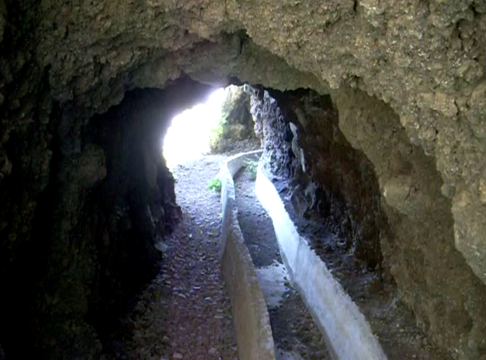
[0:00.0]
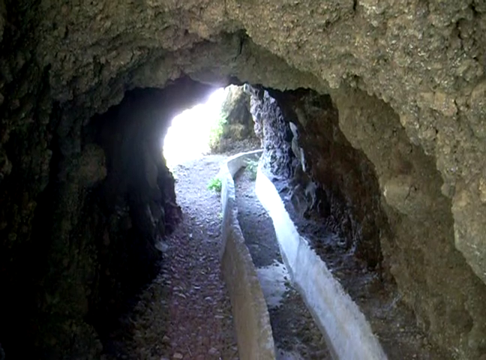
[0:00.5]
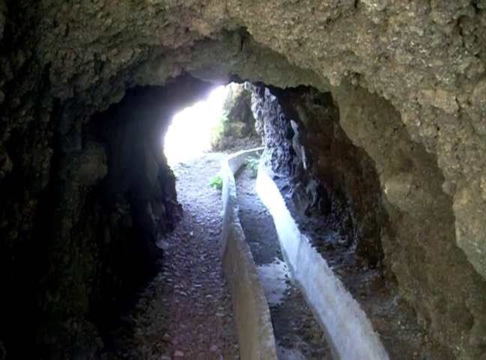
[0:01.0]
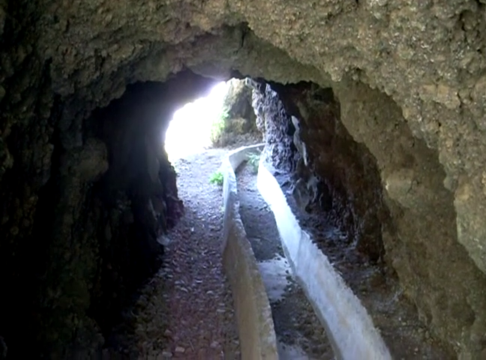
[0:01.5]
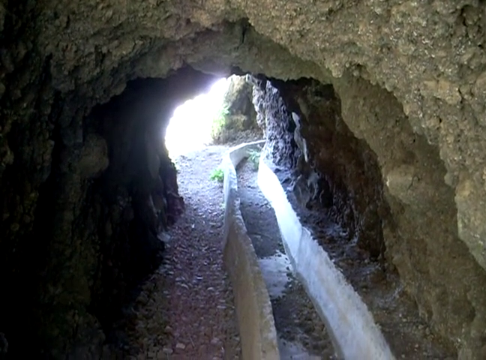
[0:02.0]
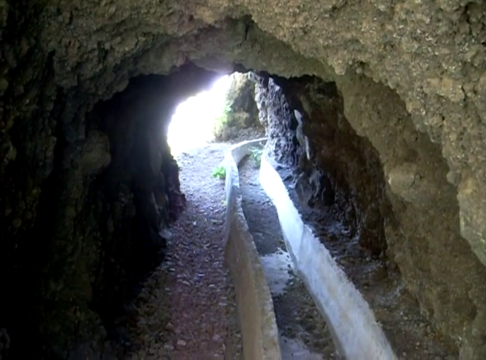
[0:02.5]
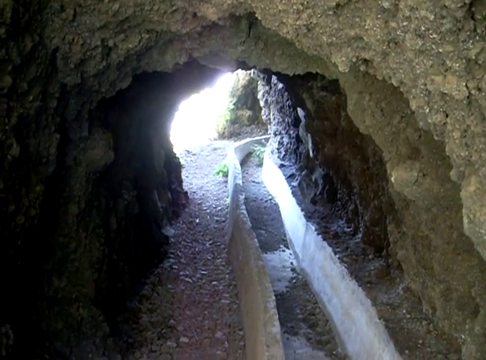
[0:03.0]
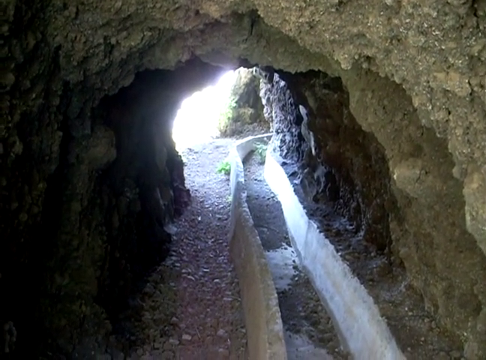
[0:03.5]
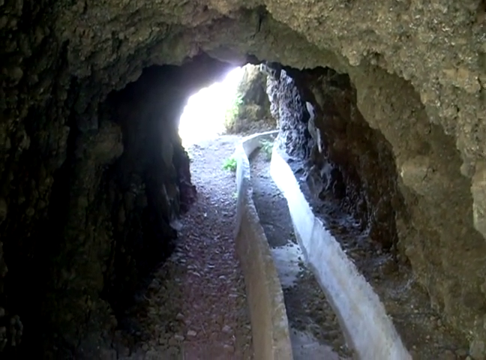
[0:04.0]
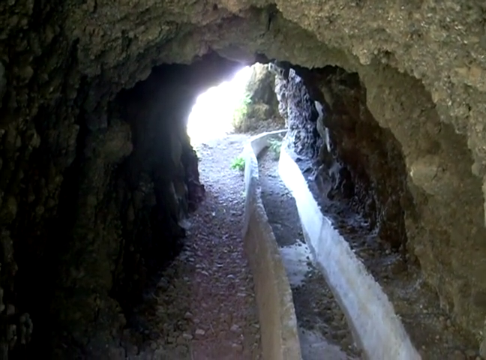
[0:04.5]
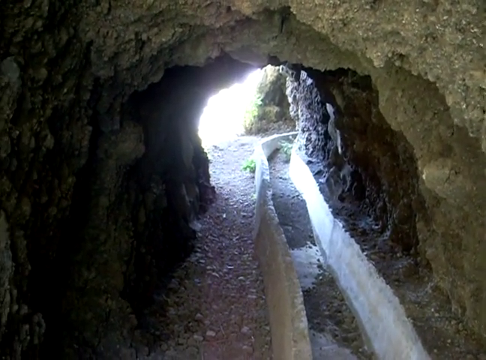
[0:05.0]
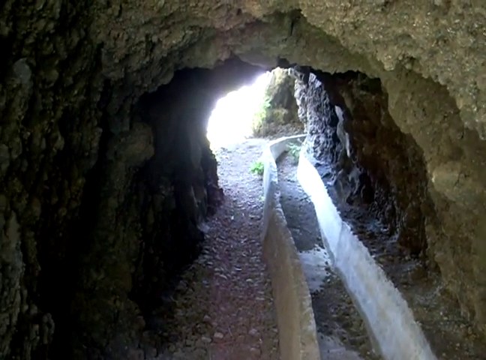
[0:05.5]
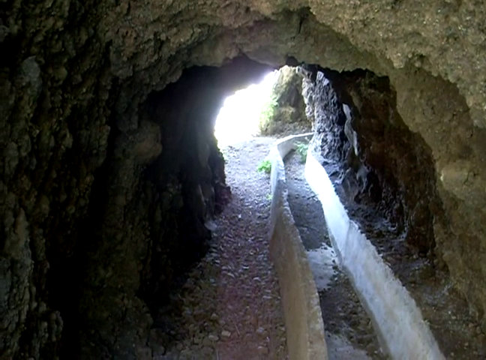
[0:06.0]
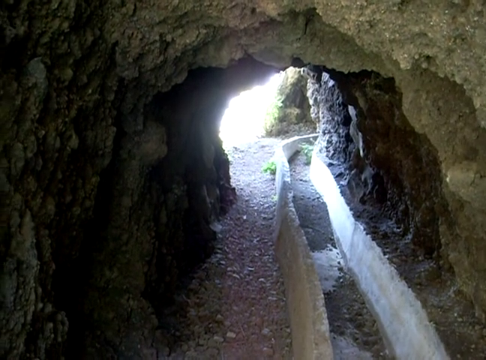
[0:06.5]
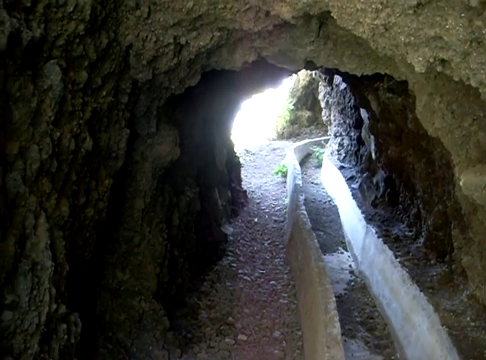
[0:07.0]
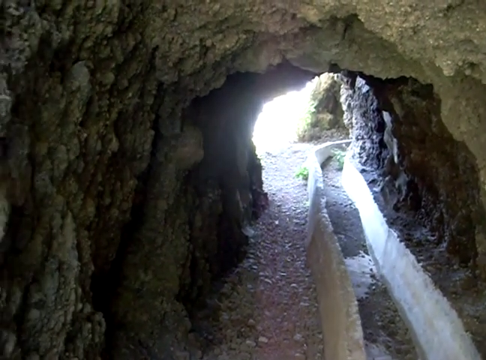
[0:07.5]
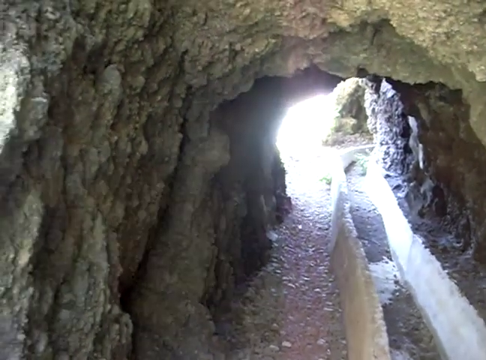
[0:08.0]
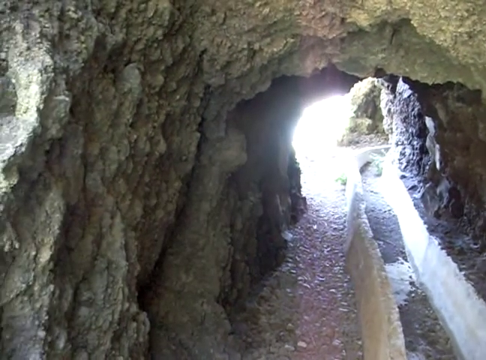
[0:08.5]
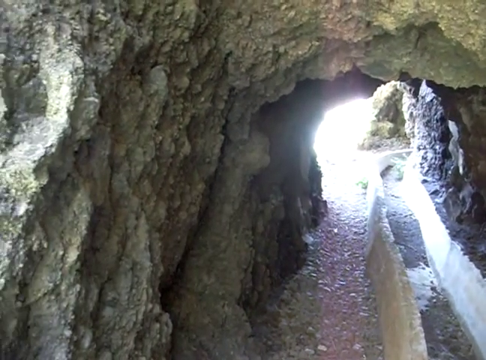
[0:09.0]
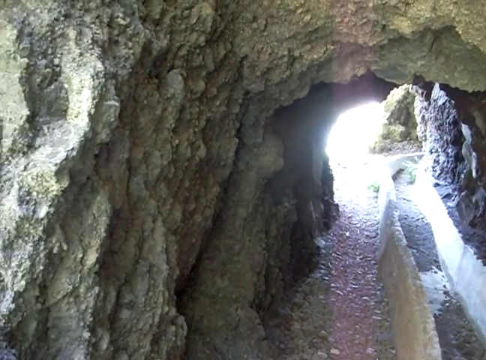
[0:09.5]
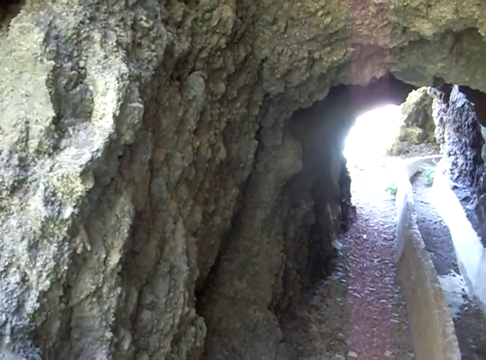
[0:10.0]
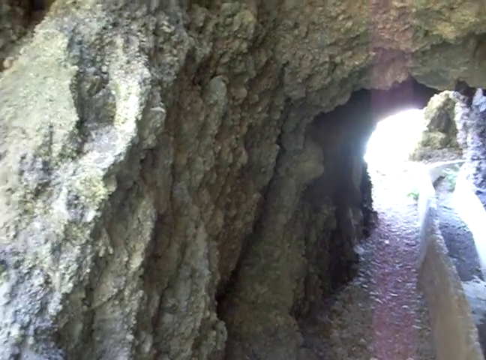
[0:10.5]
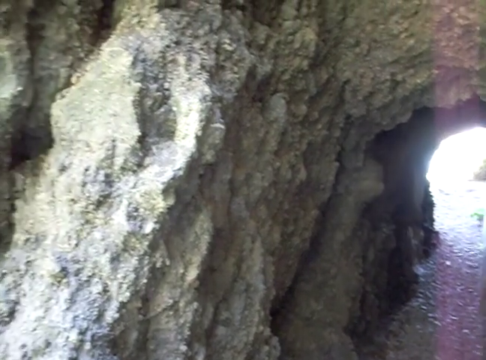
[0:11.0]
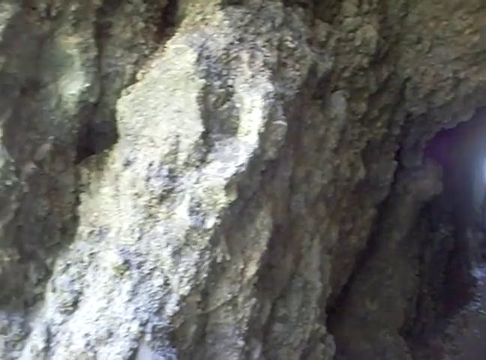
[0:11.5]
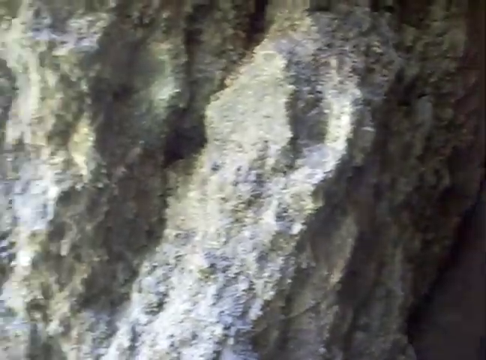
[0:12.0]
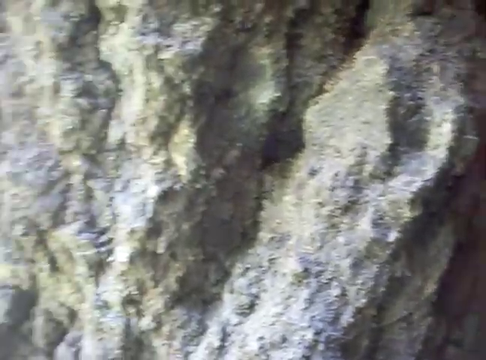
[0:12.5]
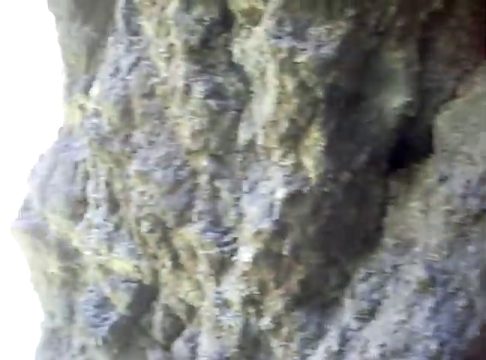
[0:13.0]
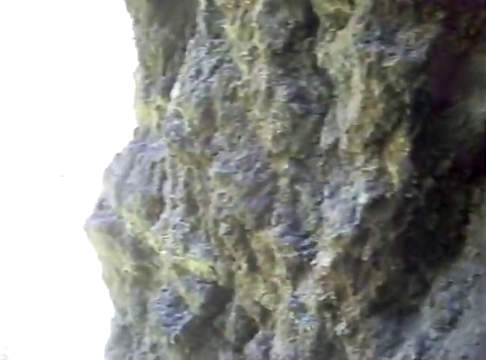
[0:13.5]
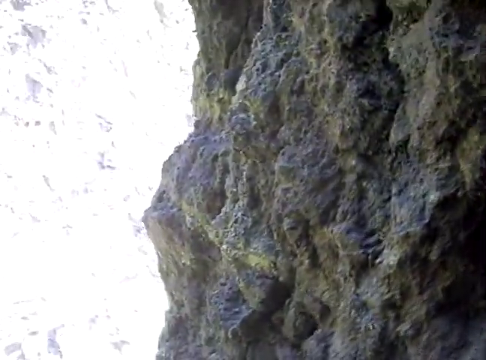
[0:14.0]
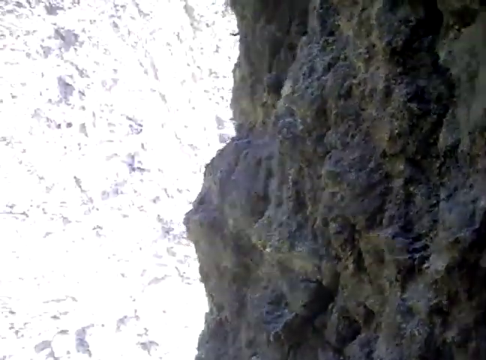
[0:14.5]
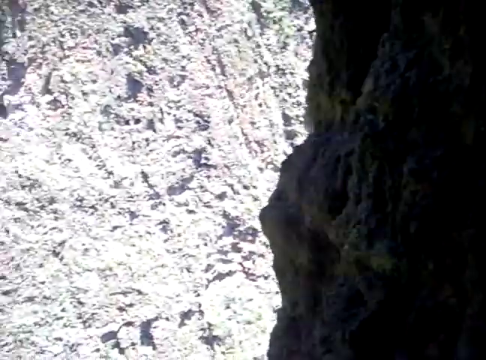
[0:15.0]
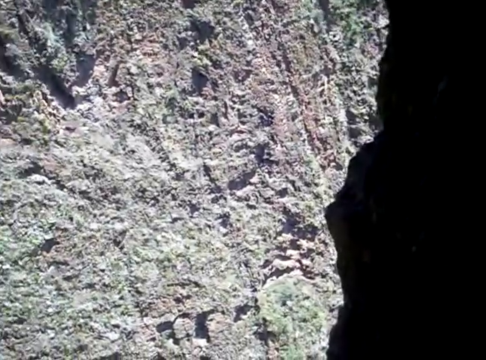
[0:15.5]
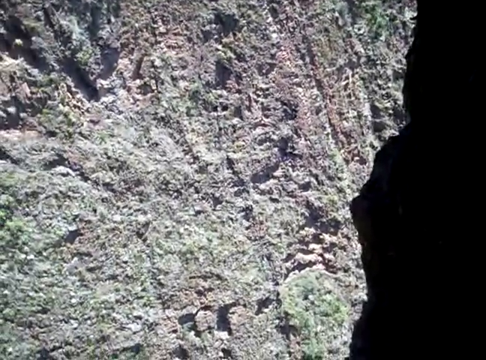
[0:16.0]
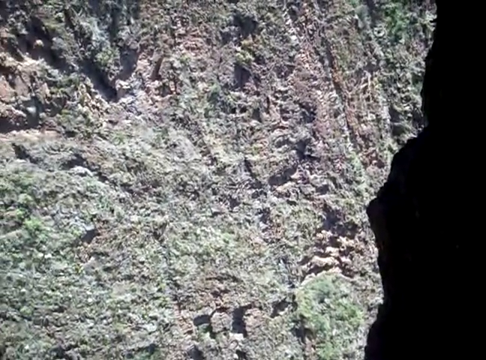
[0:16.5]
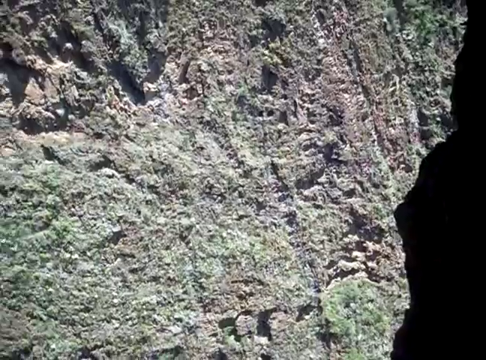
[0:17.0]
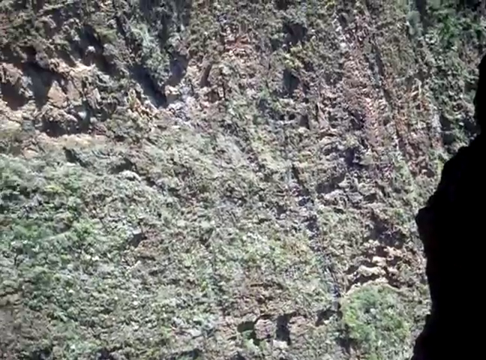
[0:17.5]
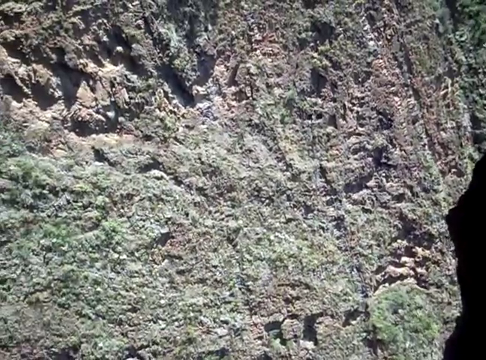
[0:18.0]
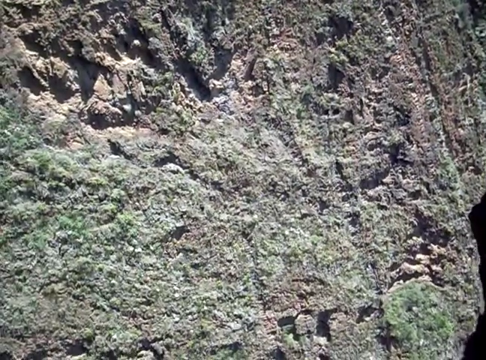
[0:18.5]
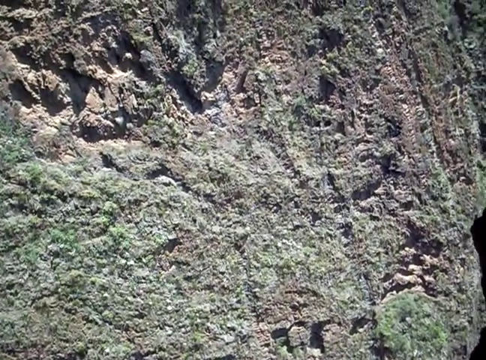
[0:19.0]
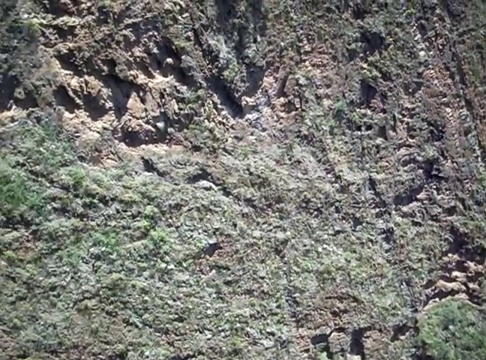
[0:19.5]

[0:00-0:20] The scene appears to be inside a cave or mining area. The walls appear to be stone, with a path carved out of them for people to enter and exit the area. There look to be mineral deposits on the wall, and someone appears to have built a little pathway underneath this area. A panoramic view shows the wall and its little crevices, with little green moss on part of the wall. Overhead, the area does not look very tall; it could be rather short. The view moves around the area, showing the different details of the wall and the lighting, and points up closely at the green moss area. Looking down the path, one side of the wall appears a lighter color, though this may be due to the lighting there. The path appears to be created by hand, forming a clear channel along one side of the wall, apparently for walking or moving things. It is unclear what the wall and channel are made of, but they appear sturdy and straight ahead.